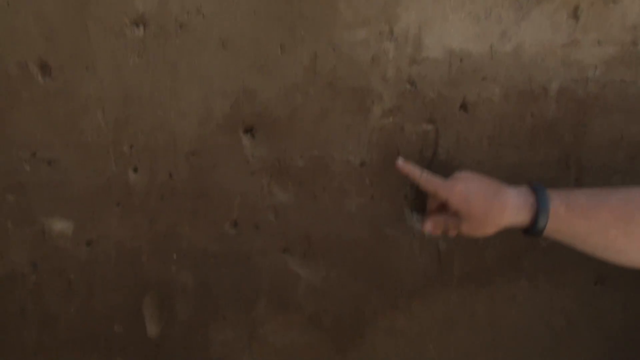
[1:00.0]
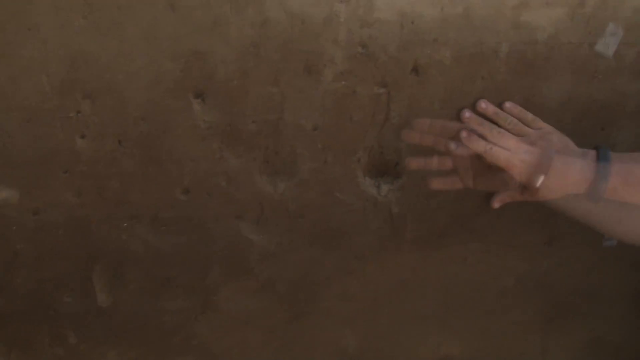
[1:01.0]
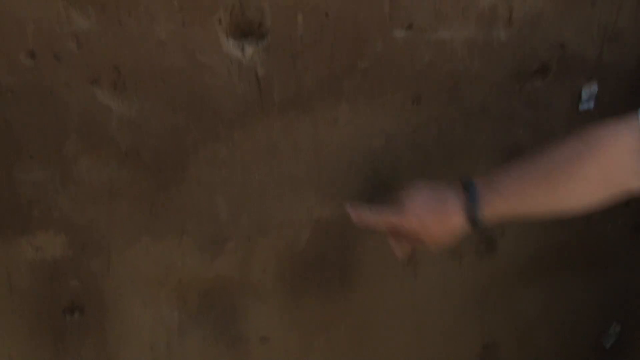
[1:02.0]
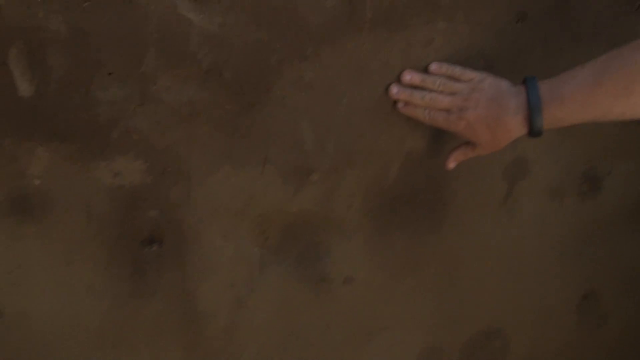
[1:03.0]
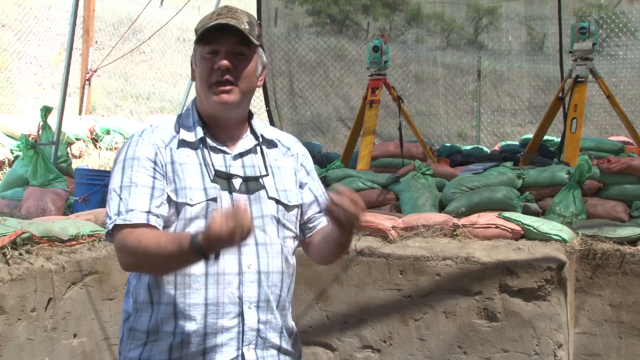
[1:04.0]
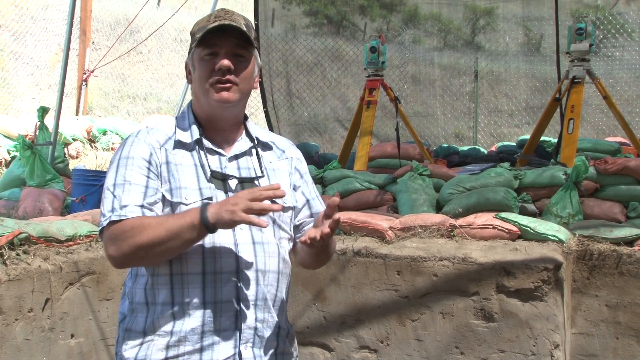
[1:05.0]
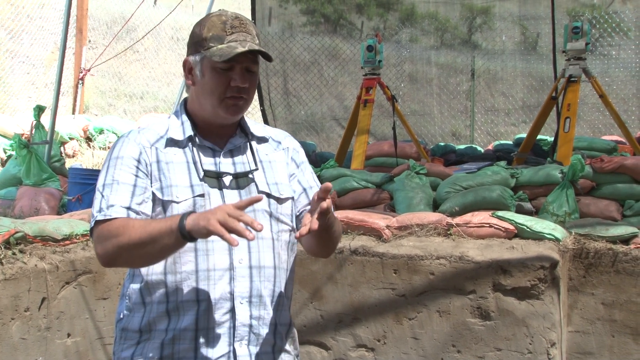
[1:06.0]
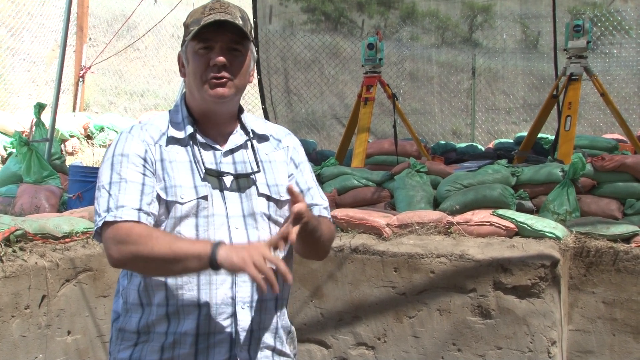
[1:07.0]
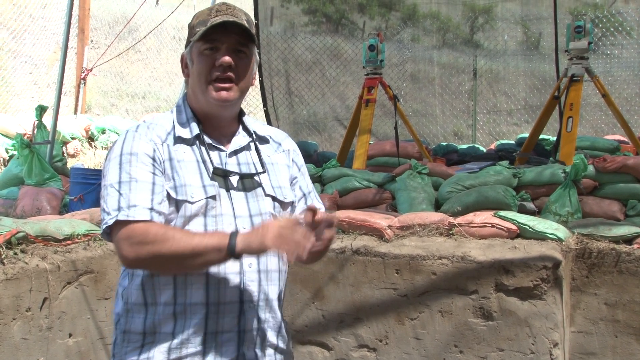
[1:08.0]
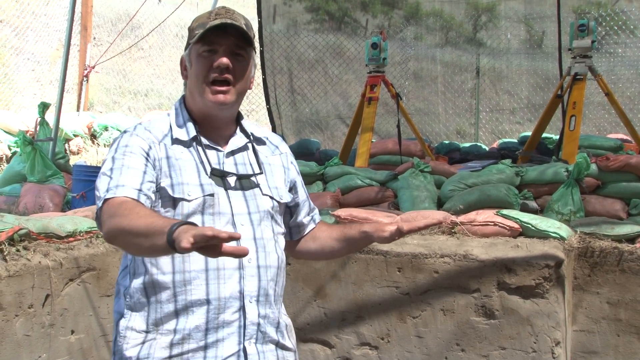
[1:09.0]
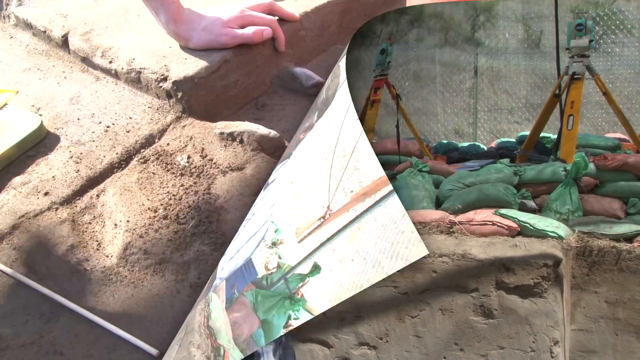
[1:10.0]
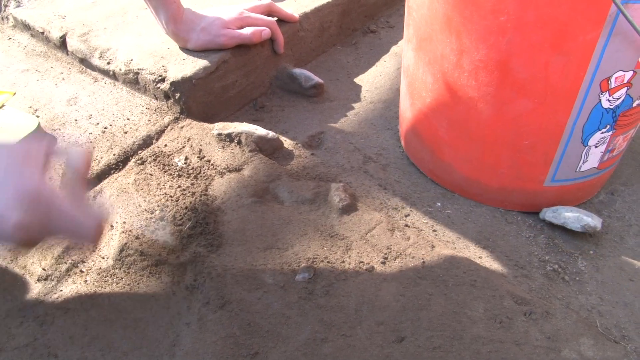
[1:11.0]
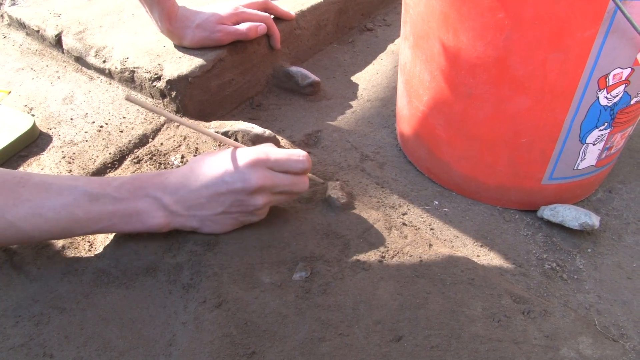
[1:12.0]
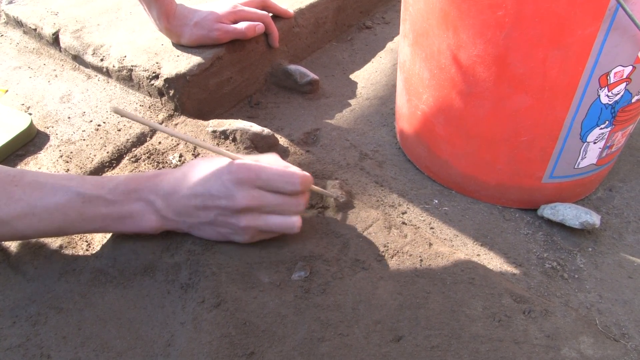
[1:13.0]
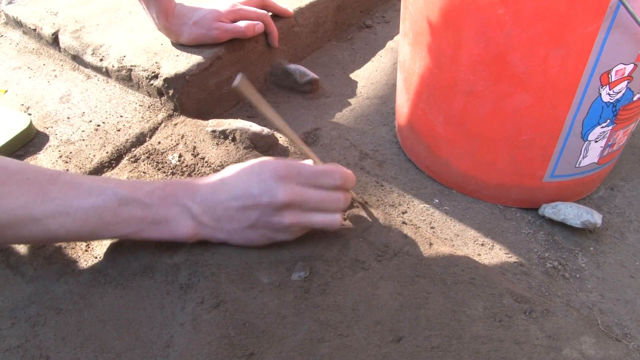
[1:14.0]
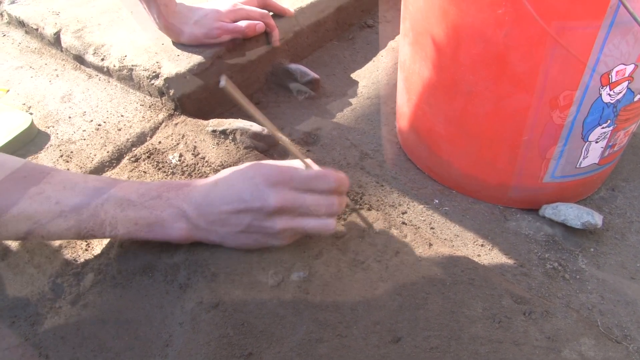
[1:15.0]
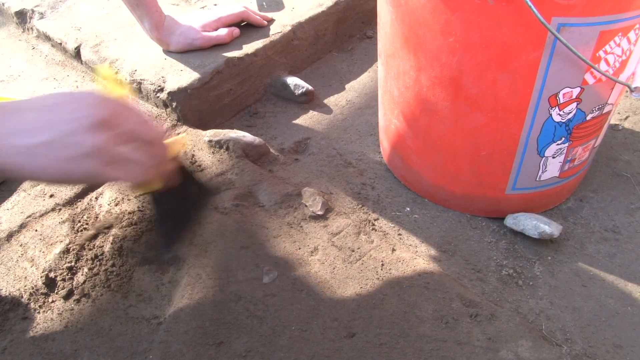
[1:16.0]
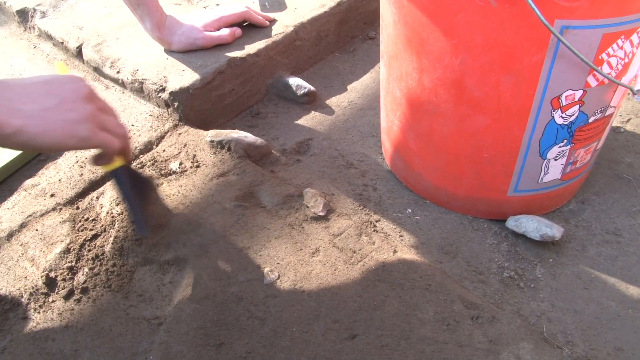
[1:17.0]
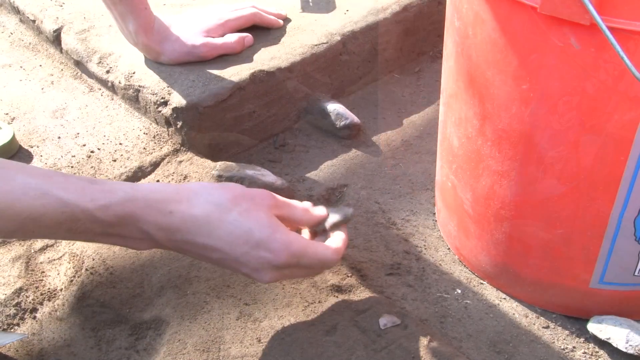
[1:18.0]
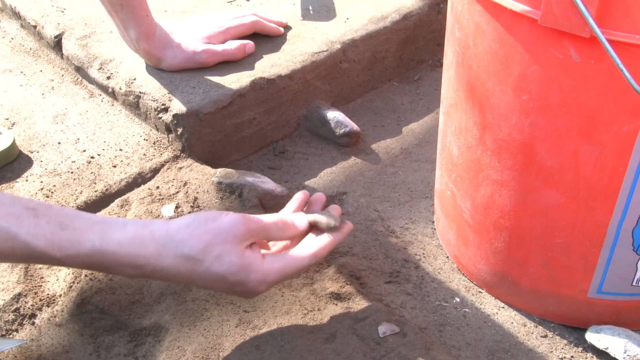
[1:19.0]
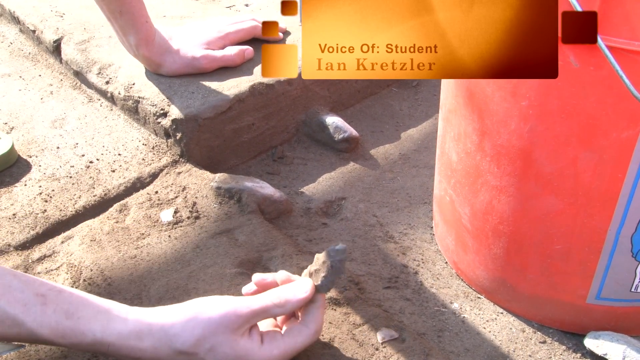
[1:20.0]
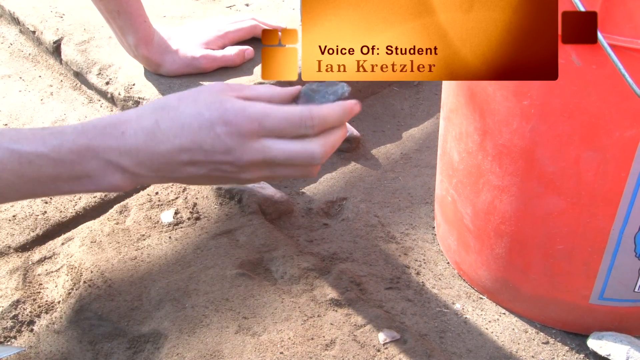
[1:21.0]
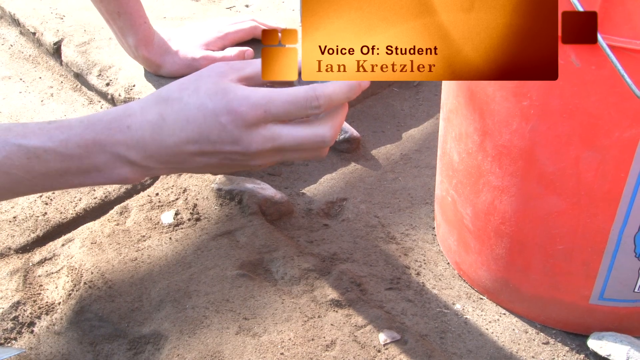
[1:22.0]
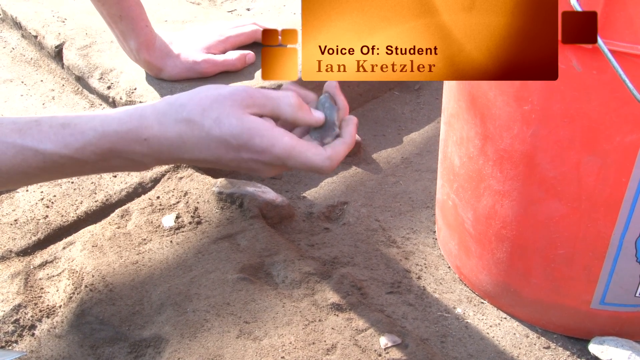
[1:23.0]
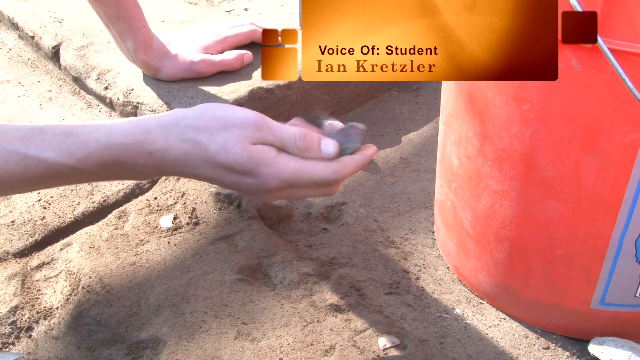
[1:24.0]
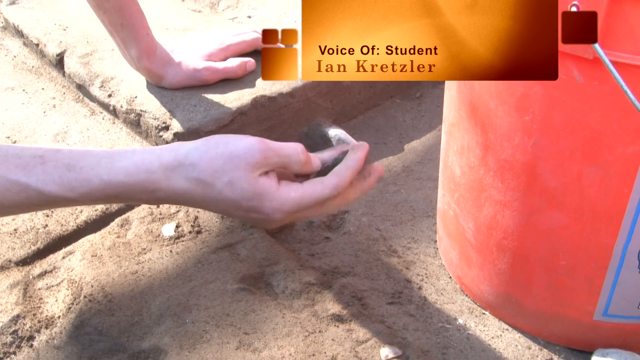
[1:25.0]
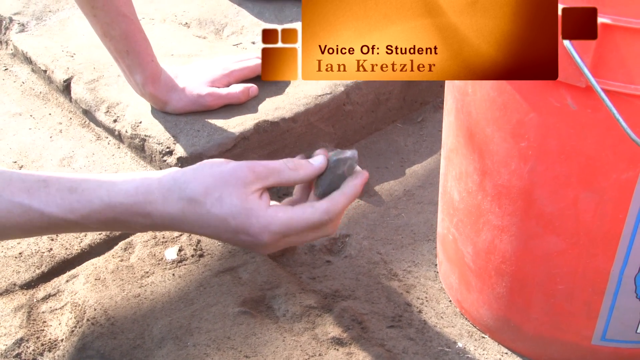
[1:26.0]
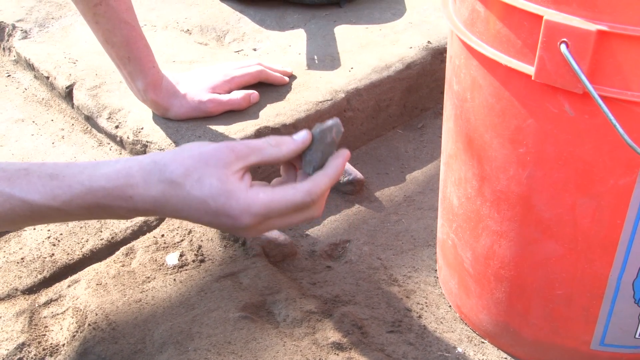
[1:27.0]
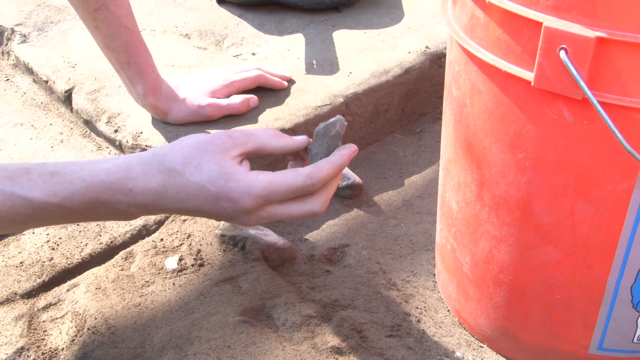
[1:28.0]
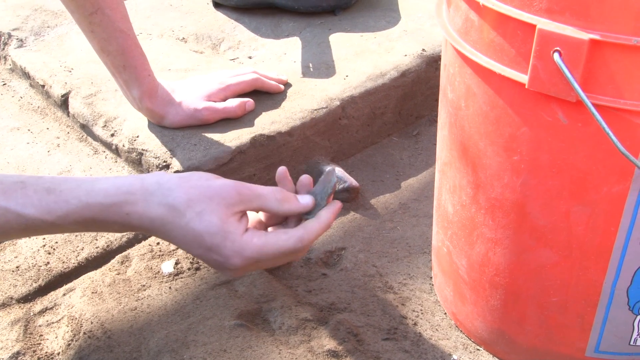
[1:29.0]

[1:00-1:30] Someone, possibly the professor or one of the students, points at some rock, a wall, or clay; what it is is unclear. The camera returns to the professor, who wears a blue shirt or a white shirt with a little blue striping and a military-like hat; he may have grayish hair and is kind of a little heavyset. Green and some red or burgundy sandbags are in the background, with netting around this area like a tent. A red bucket is shown, and a student uses something that almost looks like a pencil to mark around a rock. Someone takes a brush and picks up a rock sample. Text reads "voice of student Ian Kreitzler." The view goes back to the wall, and the person pointing at it wears a watch or something similar. Everyone shown is white.